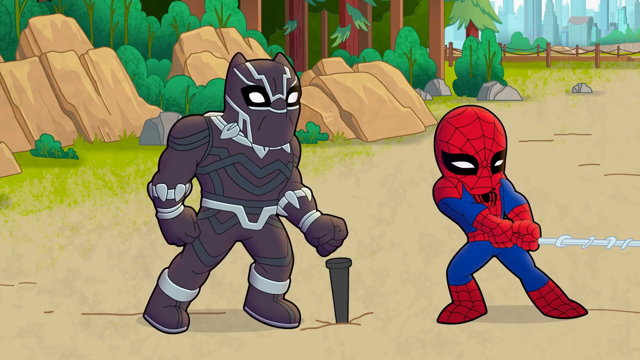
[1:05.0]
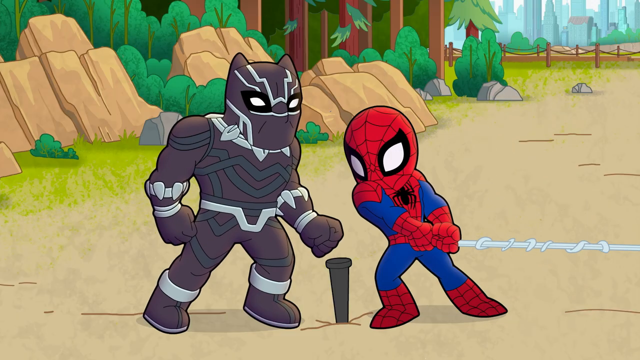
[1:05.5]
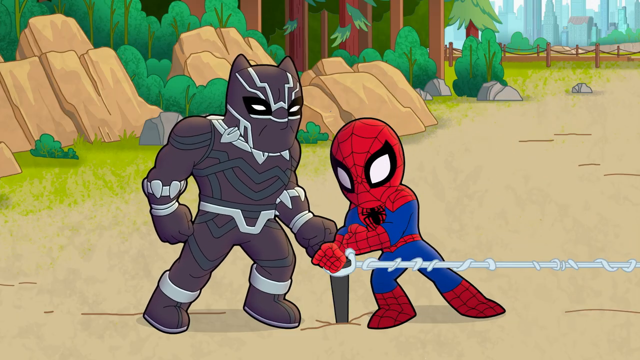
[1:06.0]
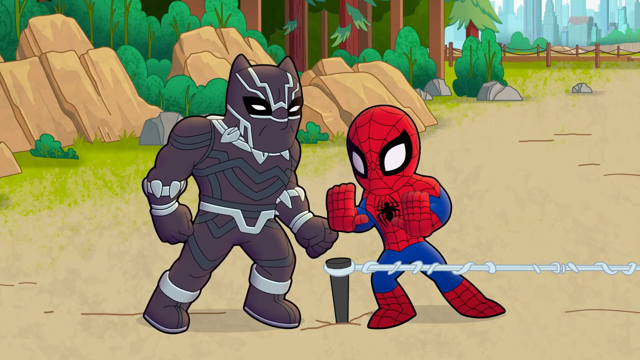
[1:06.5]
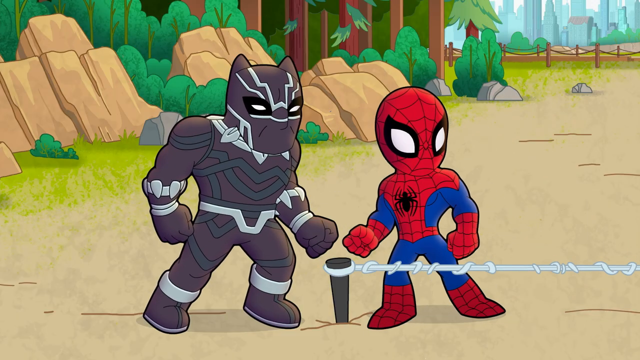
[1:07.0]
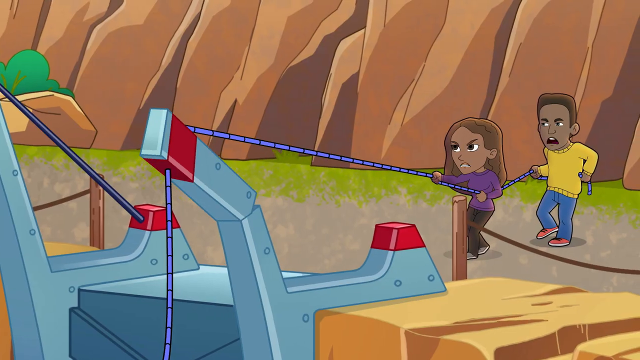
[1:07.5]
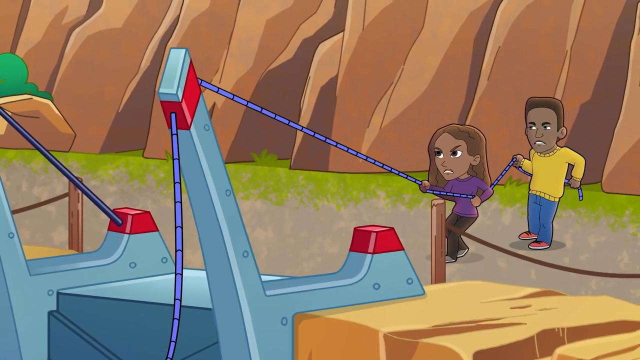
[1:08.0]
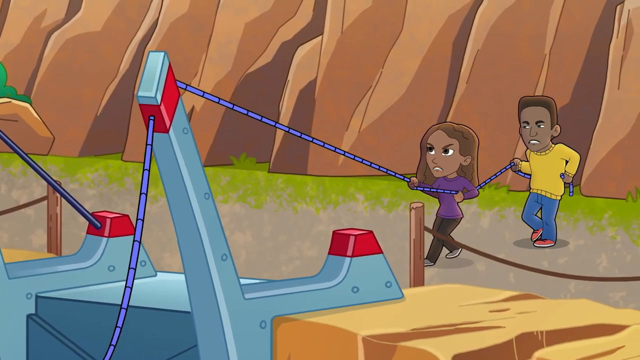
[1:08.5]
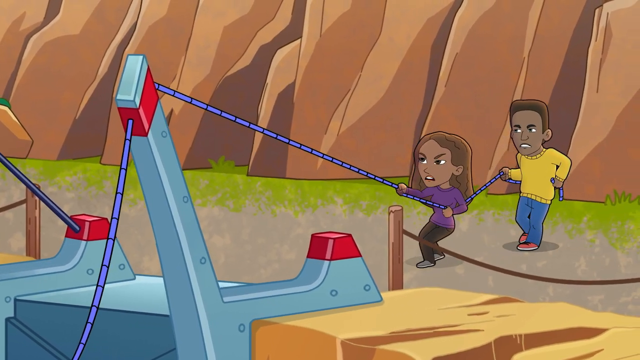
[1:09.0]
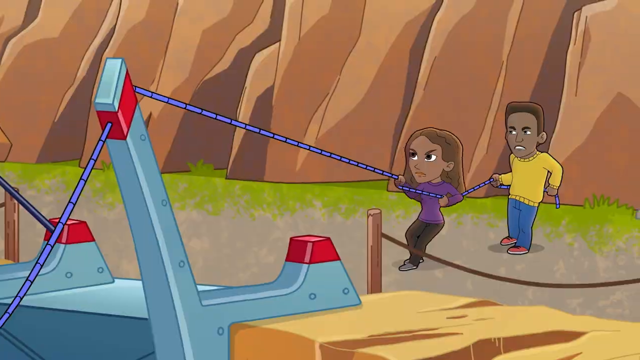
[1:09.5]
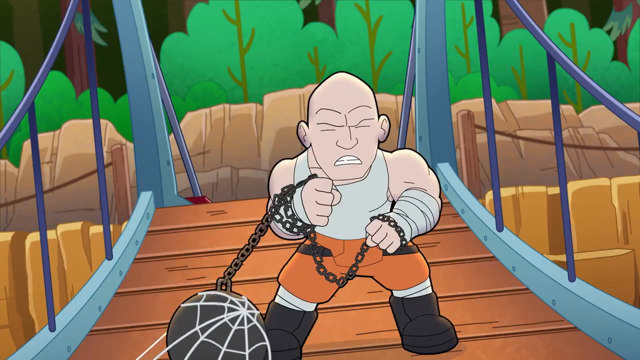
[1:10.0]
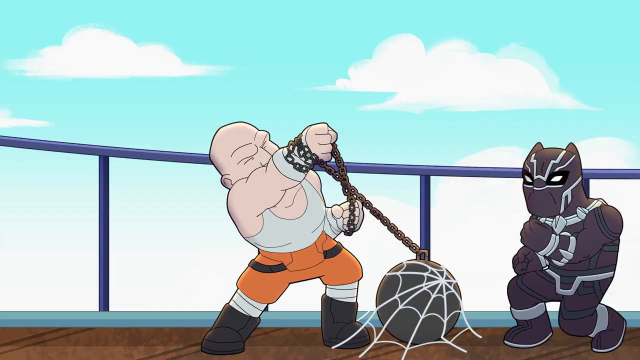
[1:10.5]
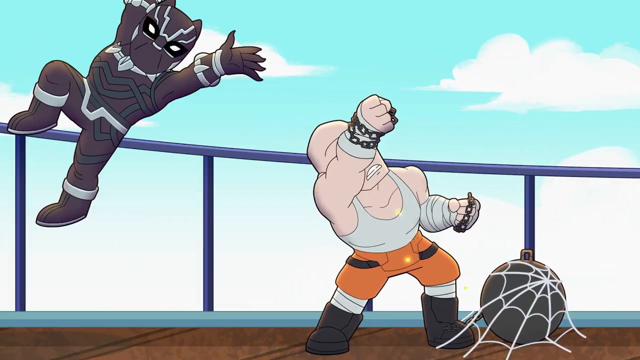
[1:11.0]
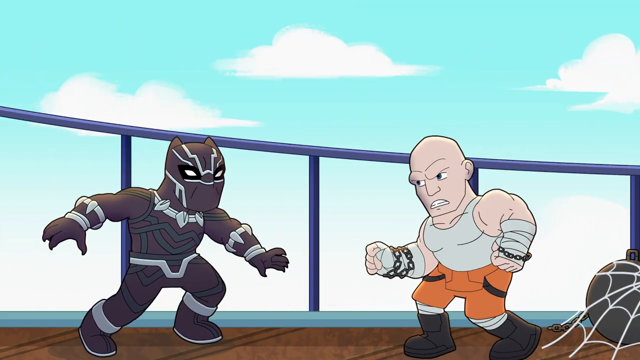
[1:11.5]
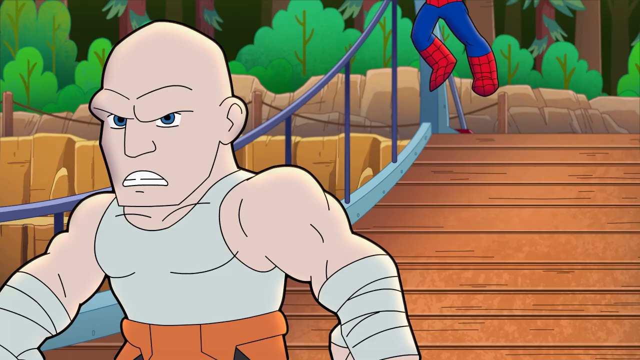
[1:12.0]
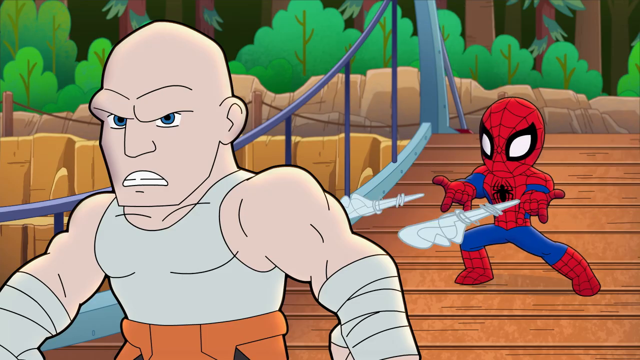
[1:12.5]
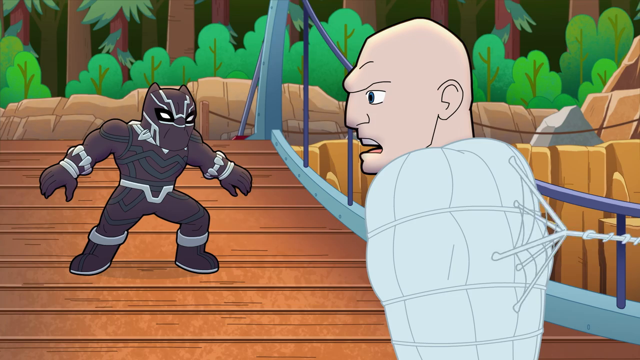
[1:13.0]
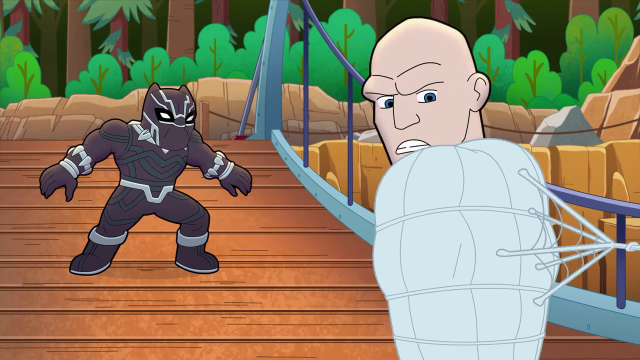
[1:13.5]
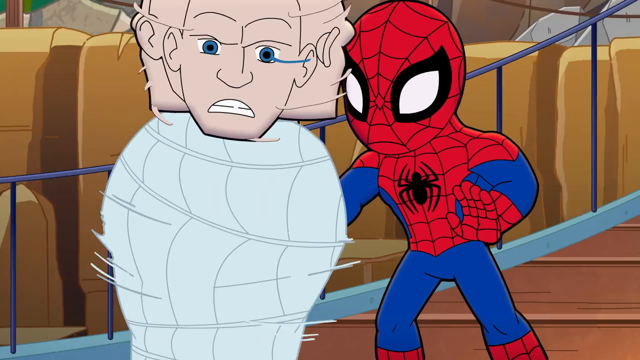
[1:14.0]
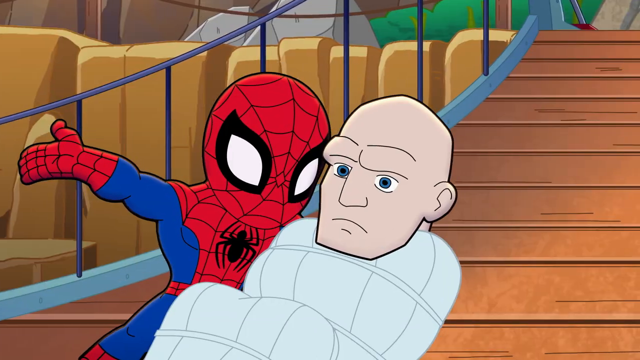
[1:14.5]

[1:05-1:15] Spidey and the maroon-clad superhero are joined by the two kids who stood with them on the bridge earlier. The kids look like they have a big slingshot-type device that shoots a spider web, which traps the bald man's ball and chain to the ground. The bald man fights with the maroon-clad hero and with Spidey, who seems to subdue him at the end. The action shifts back and forth between the bridge, the foot of the cliff and a boat. Spidey uses his web to wrap the bald man until he is kind of mummified, with just his head sticking out, and then they tie him to a stake on the ground. The kids look like they are standing on a cliff or somewhere a little ways away.